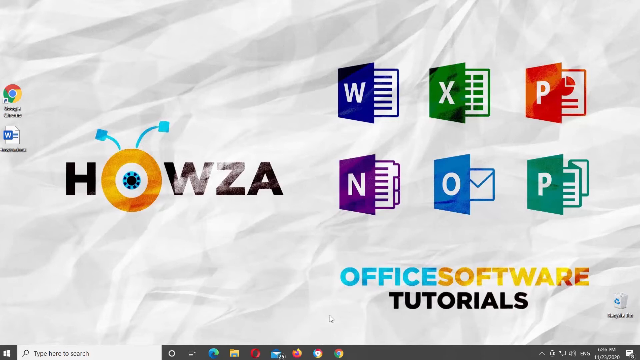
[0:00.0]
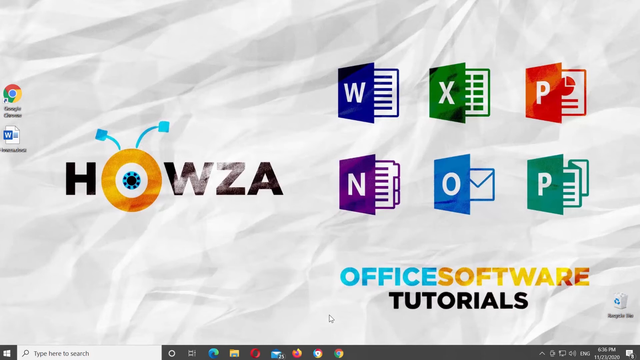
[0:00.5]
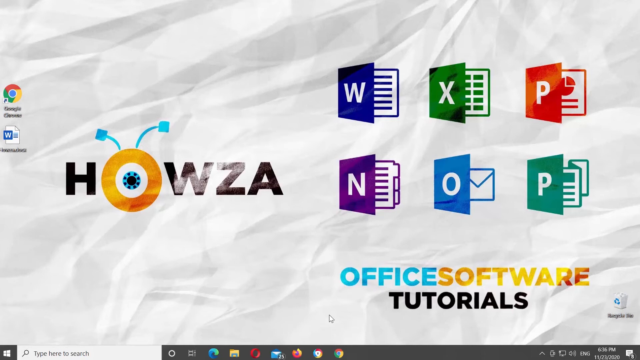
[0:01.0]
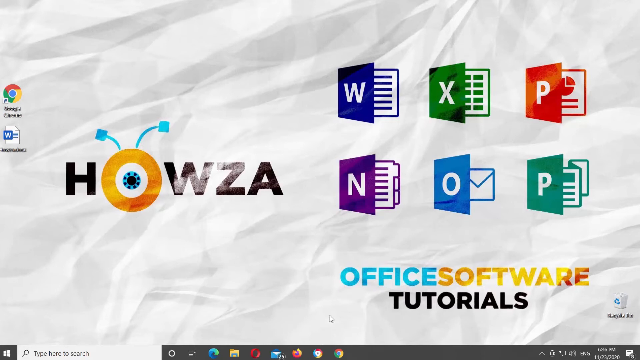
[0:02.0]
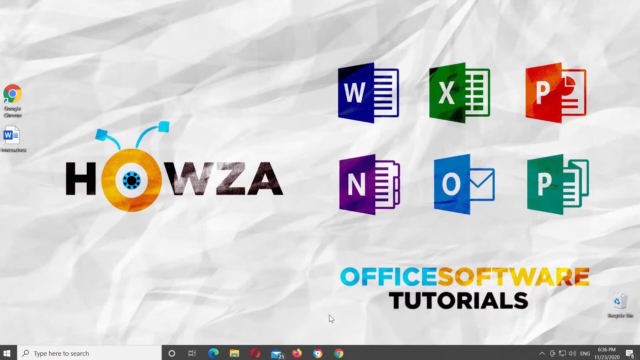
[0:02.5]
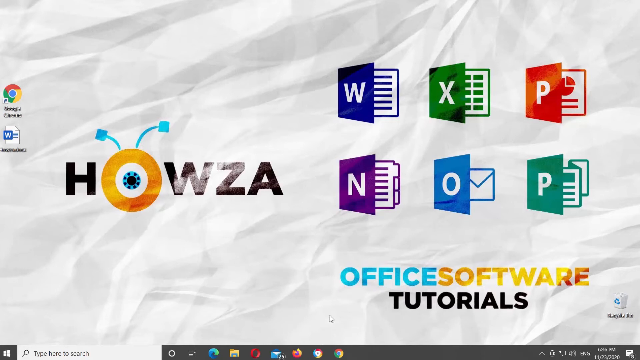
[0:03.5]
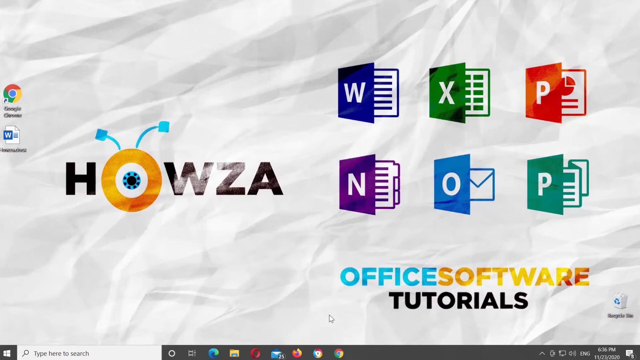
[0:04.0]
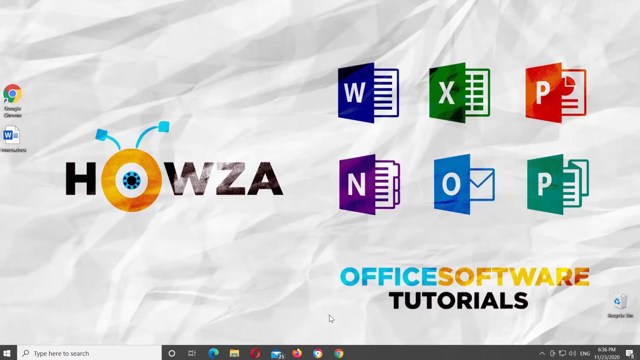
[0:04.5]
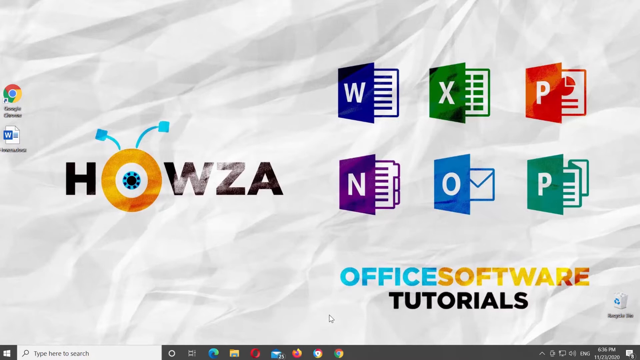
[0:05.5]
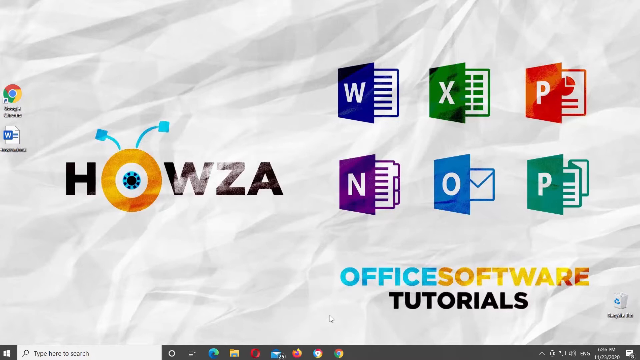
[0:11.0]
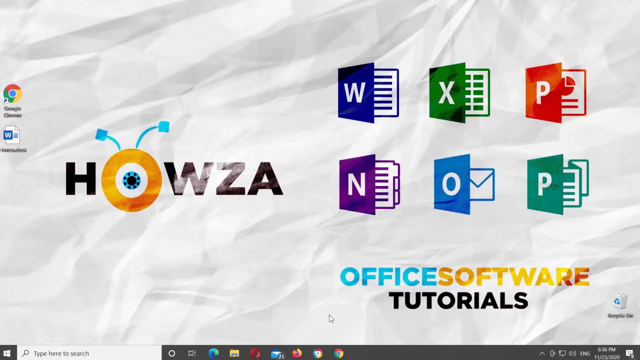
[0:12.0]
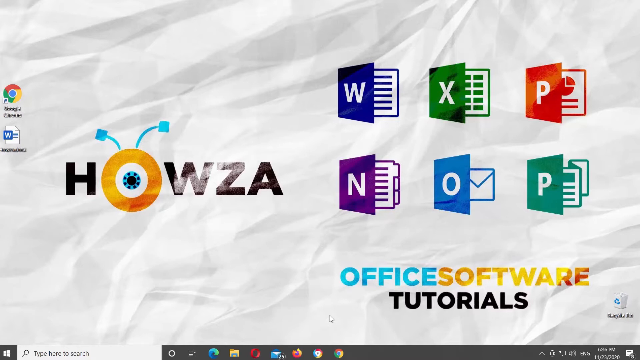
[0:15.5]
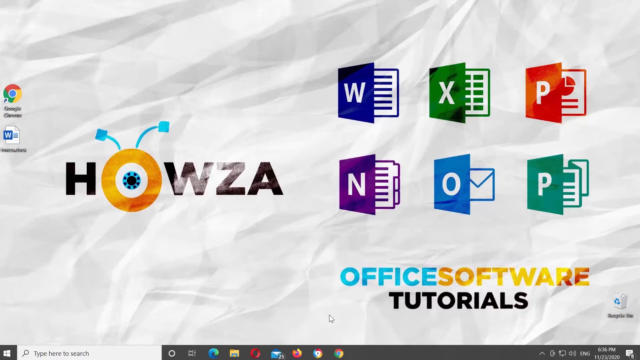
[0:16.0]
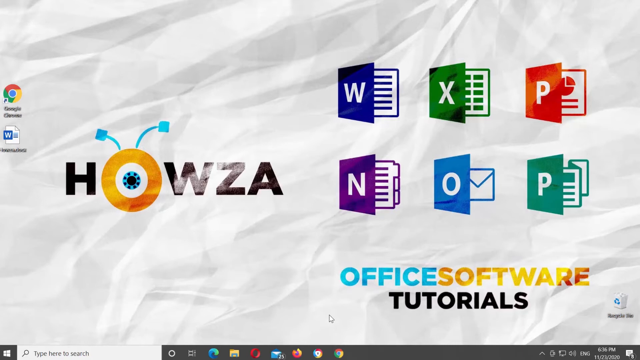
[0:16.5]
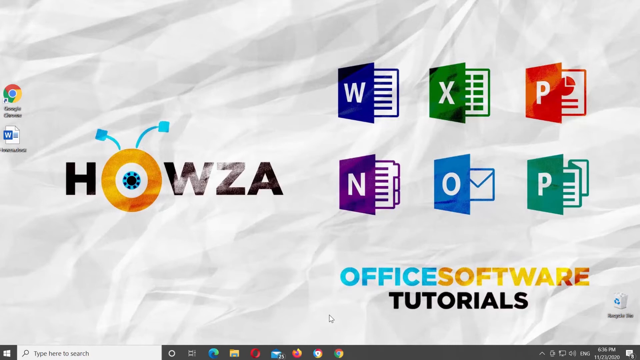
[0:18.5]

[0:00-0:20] A computer desktop home screen shows icons for Excel, PowerPoint, Notes and OneNote, along with a Google Chrome icon and a Word document. Another browser logo is written in bold. There are six icons on the right-hand side and two icons, Google and a web document, on the left-hand side. Tutorial text is written in different colors: blue, orange and red. The screen appears to be the home page of a desktop or the web, with other icons pinned in the window. Nothing on the screen changes; it shows a single view of icons for making notes, documents and slides.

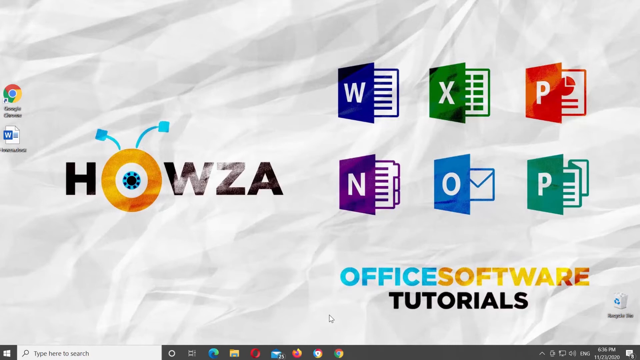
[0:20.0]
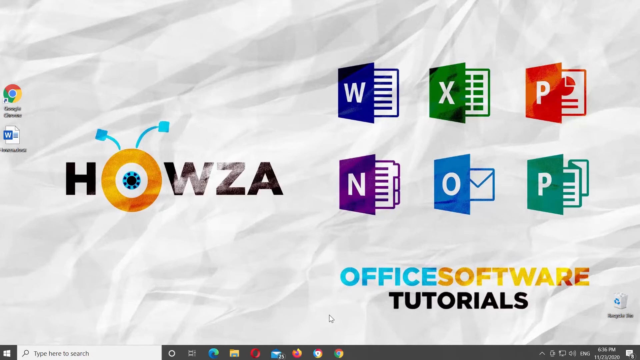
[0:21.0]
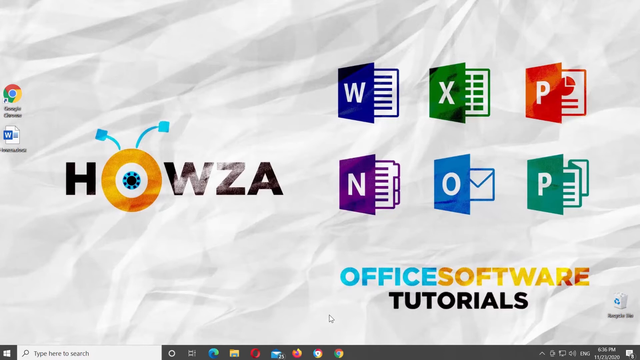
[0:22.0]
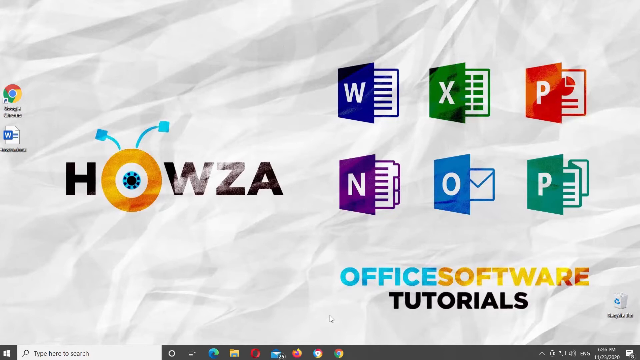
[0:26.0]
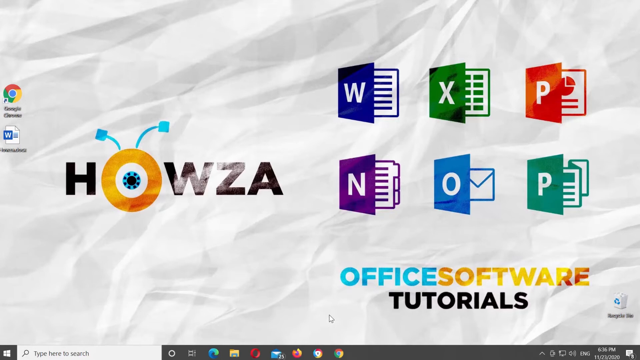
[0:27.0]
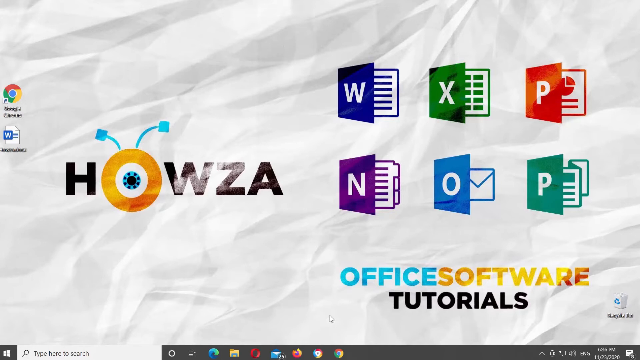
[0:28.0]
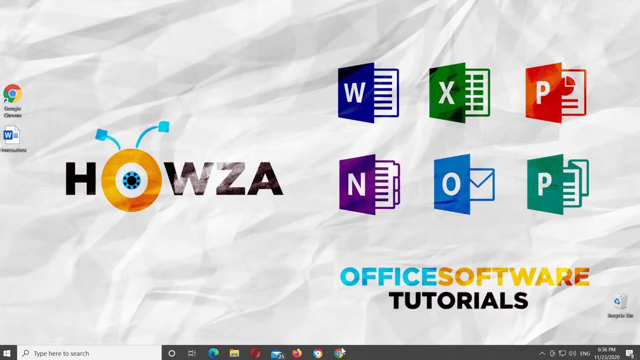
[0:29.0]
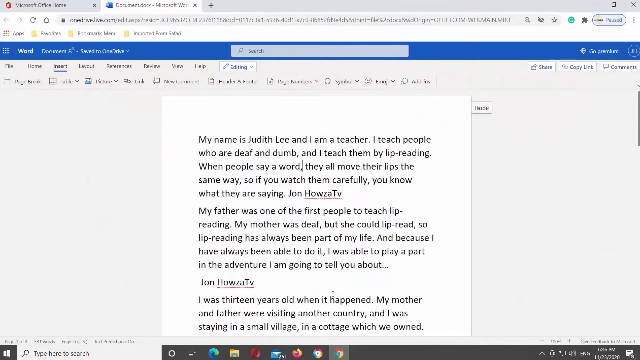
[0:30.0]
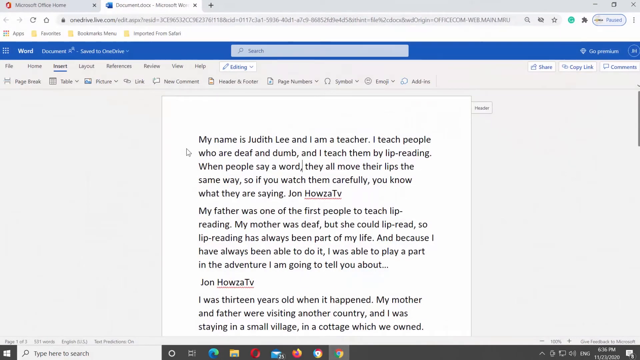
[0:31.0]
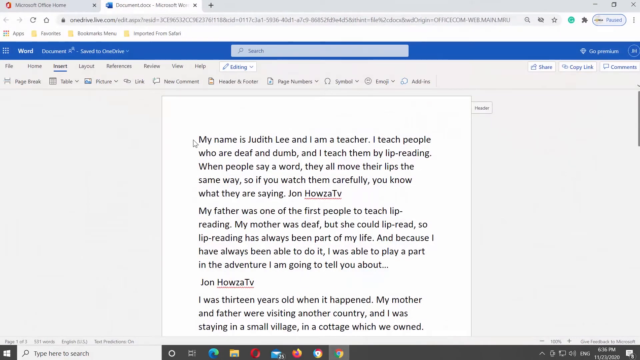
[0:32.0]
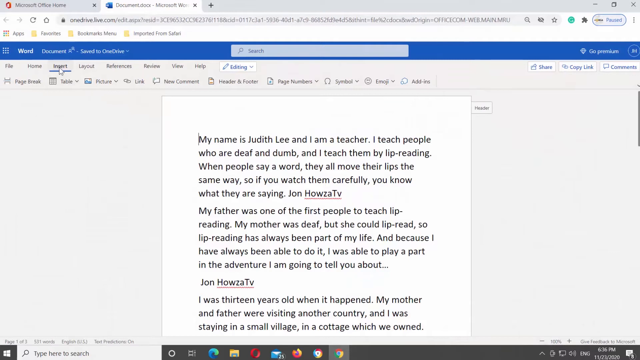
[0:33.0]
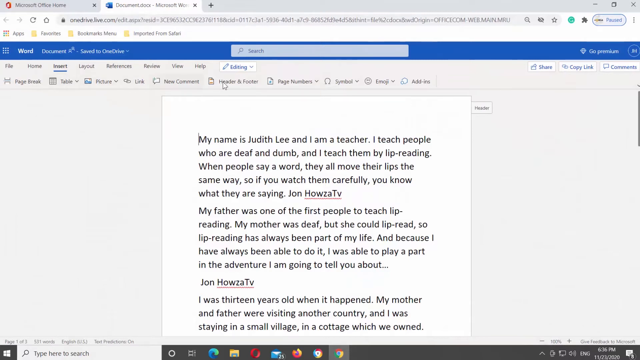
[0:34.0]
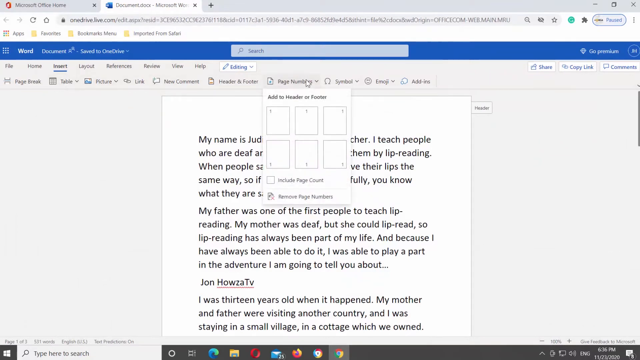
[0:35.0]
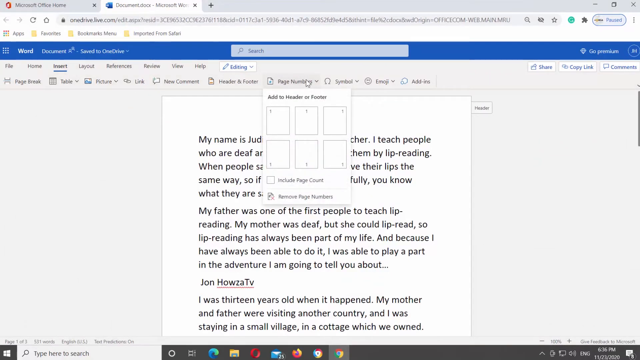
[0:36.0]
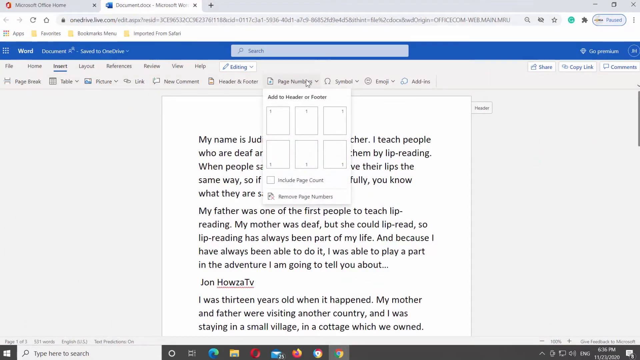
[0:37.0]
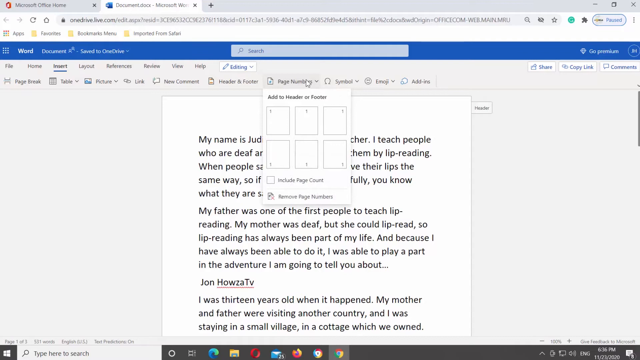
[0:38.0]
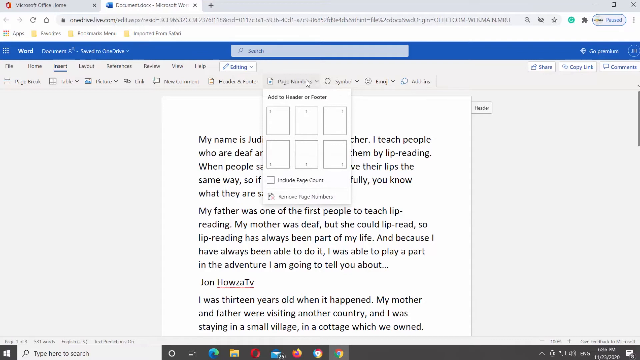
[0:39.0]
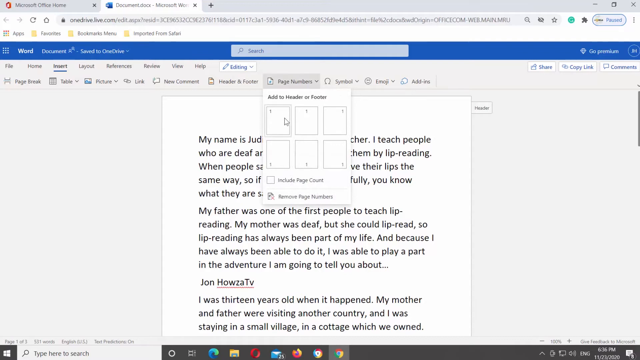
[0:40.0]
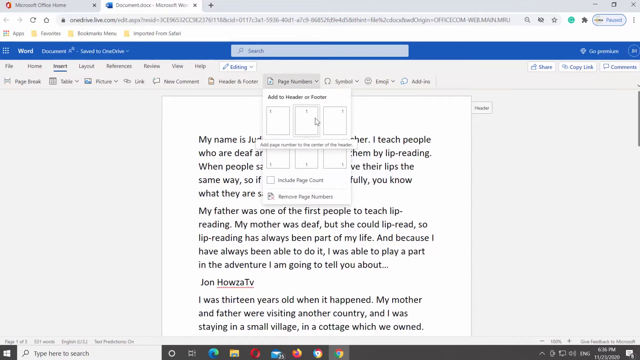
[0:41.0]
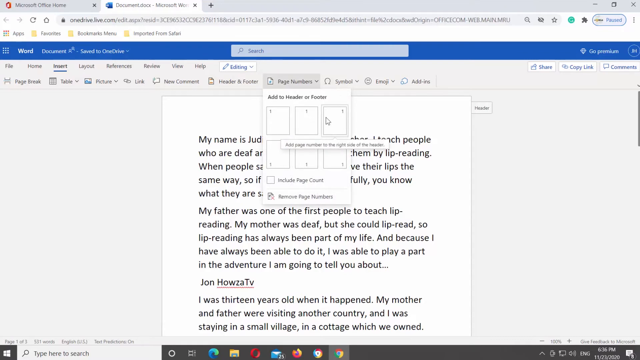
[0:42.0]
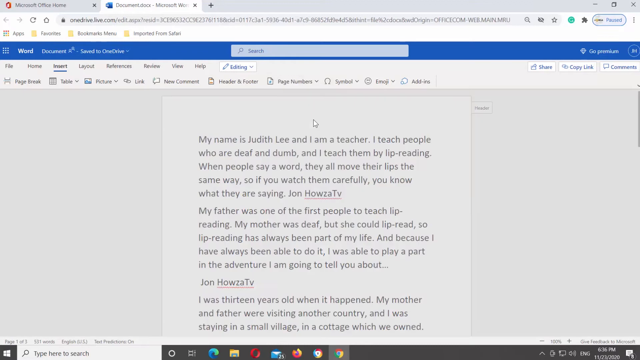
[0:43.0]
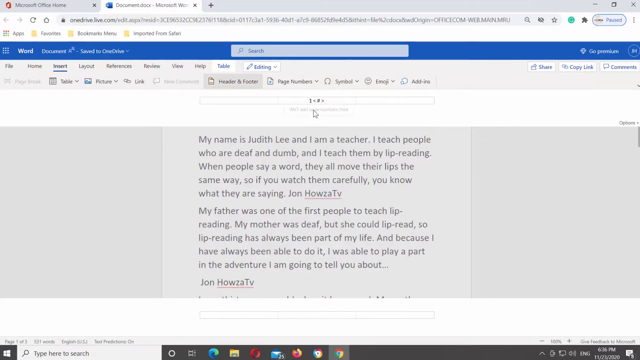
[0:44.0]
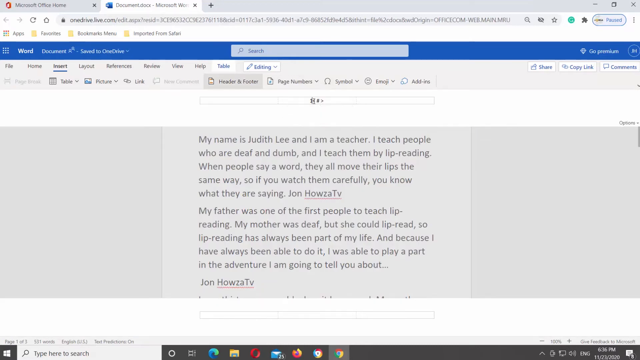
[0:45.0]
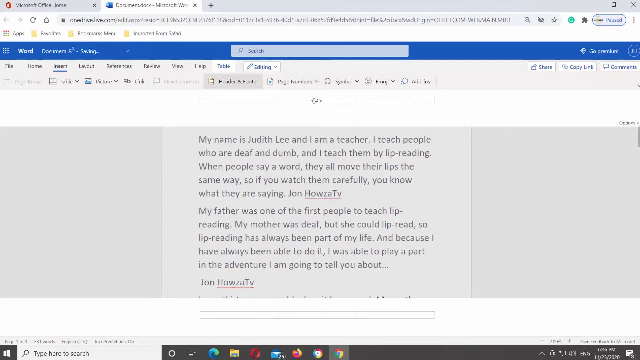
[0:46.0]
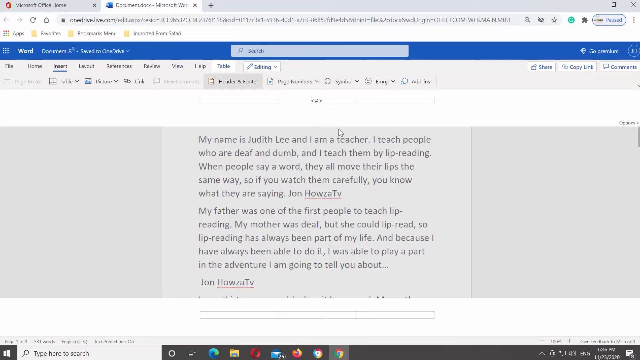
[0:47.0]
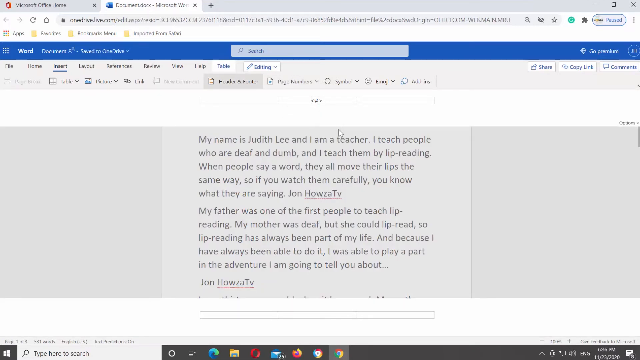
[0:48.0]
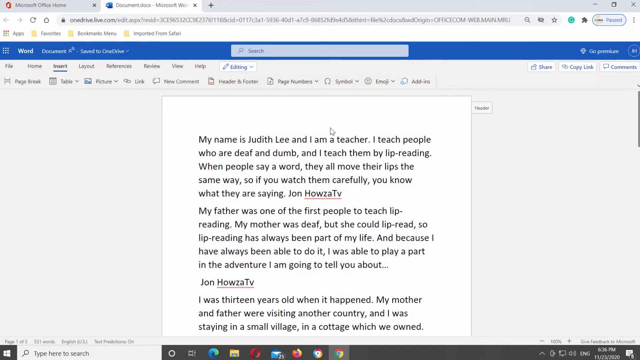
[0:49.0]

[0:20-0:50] The desktop home page shows a Paint icon and six icons on the left for making documents: Word, PowerPoint, OneNote and Excel. Another browser name is shown on the screen. The icon is clicked and a document opens containing information about a person who is a teacher. This person is writing a note in Word to the HOWZA TV, editing the document.